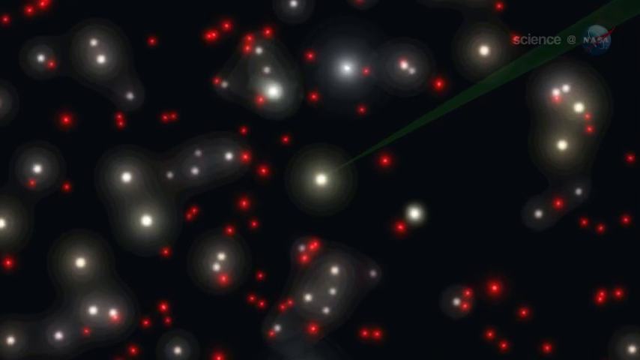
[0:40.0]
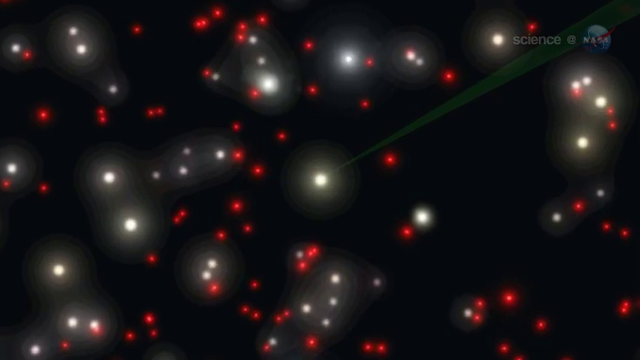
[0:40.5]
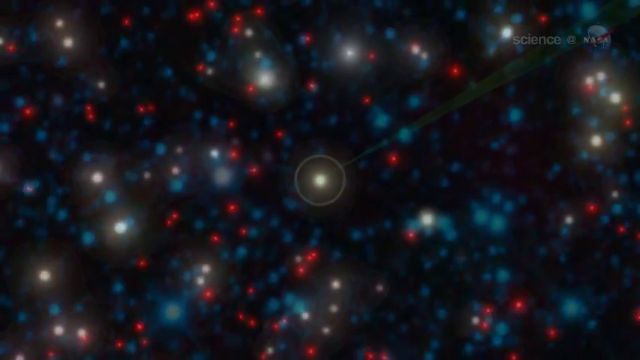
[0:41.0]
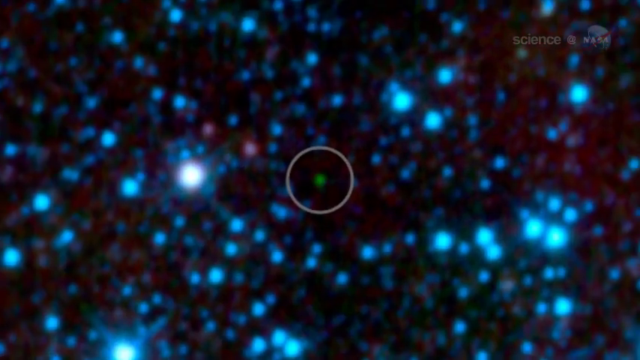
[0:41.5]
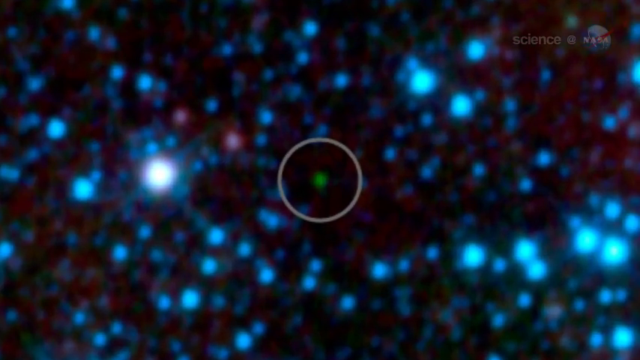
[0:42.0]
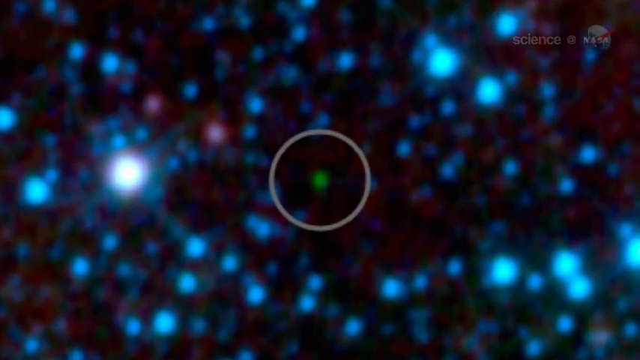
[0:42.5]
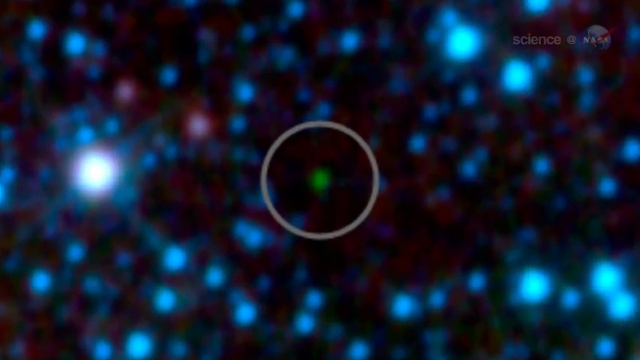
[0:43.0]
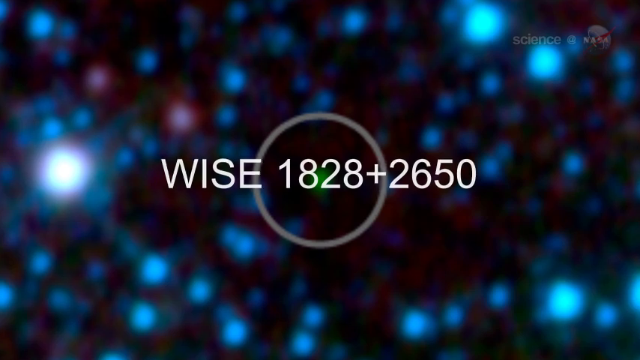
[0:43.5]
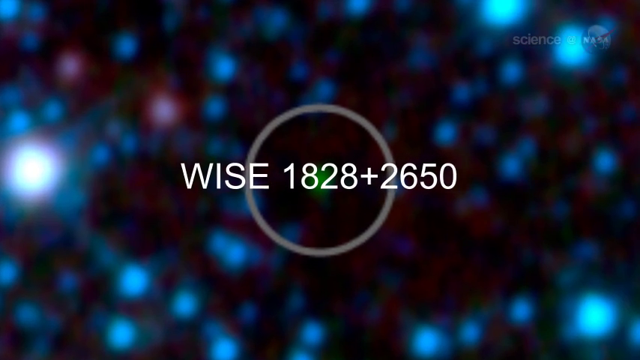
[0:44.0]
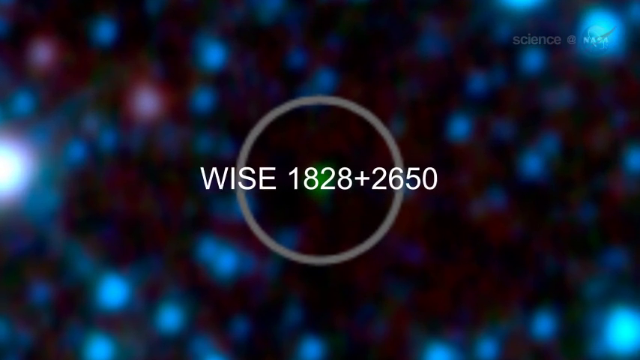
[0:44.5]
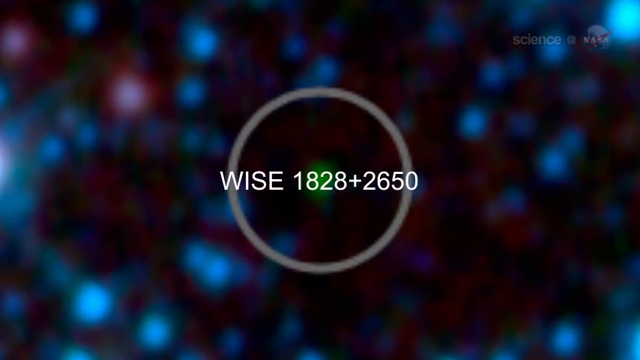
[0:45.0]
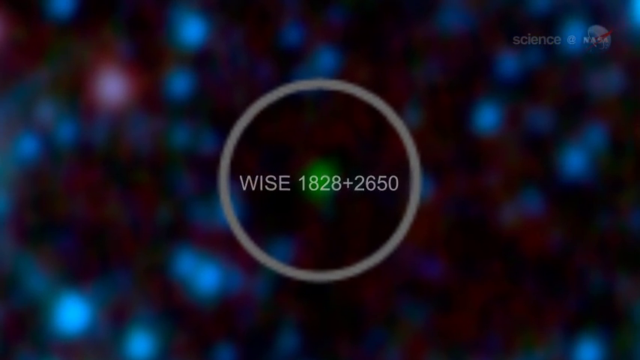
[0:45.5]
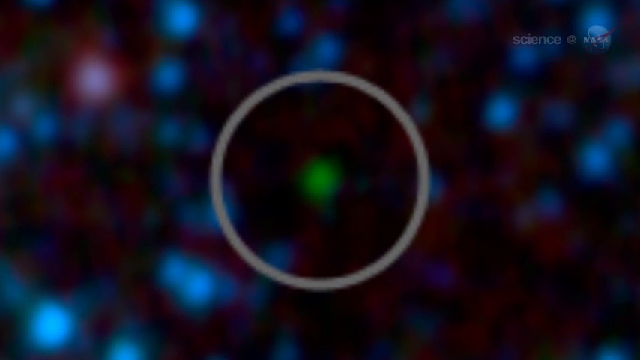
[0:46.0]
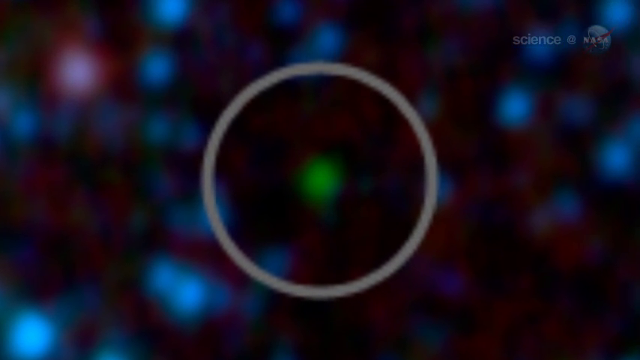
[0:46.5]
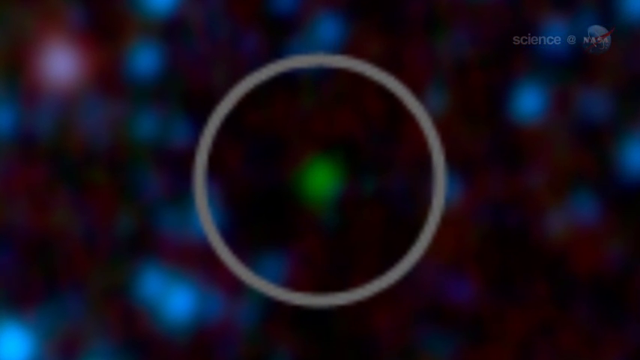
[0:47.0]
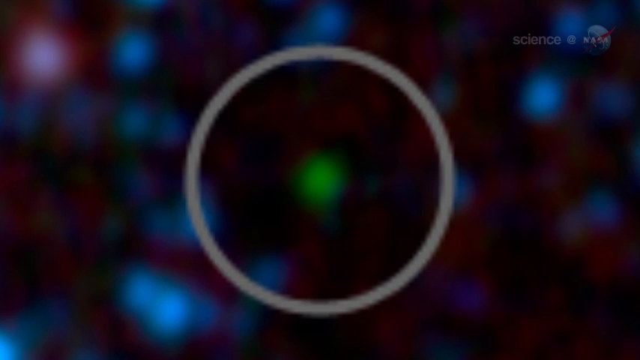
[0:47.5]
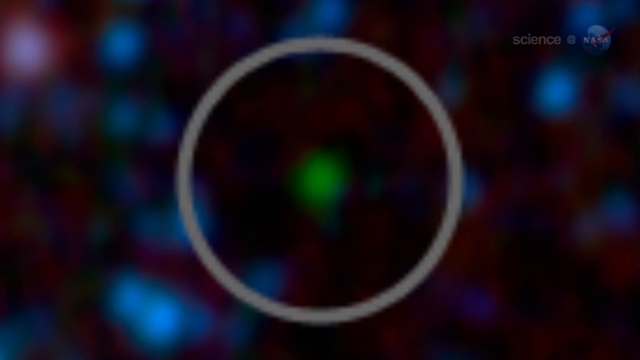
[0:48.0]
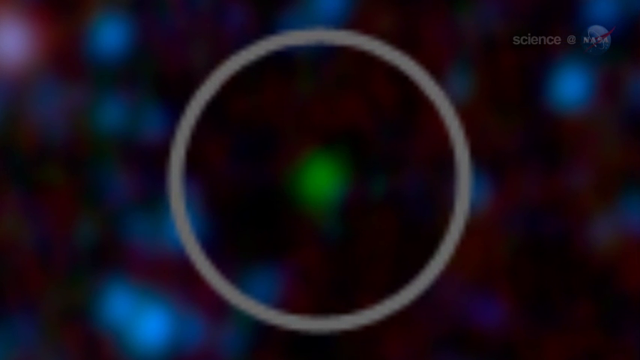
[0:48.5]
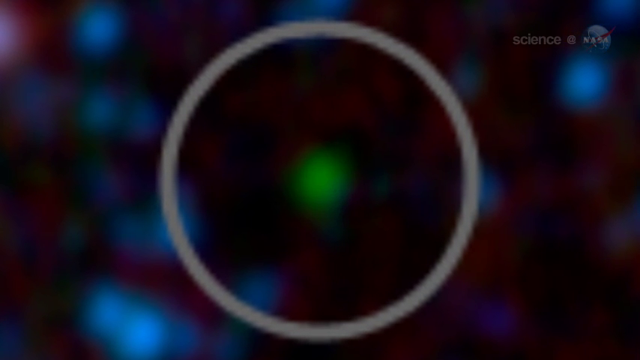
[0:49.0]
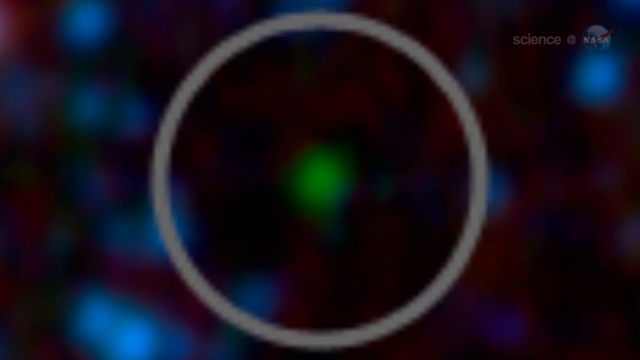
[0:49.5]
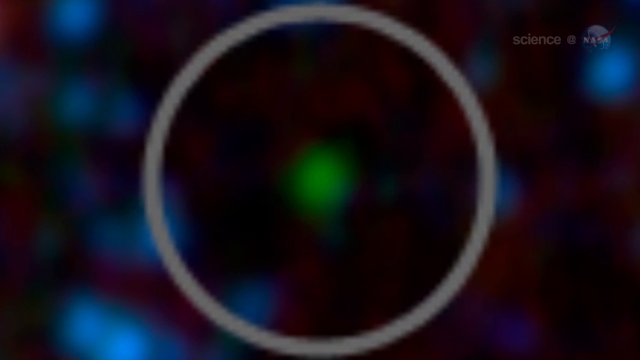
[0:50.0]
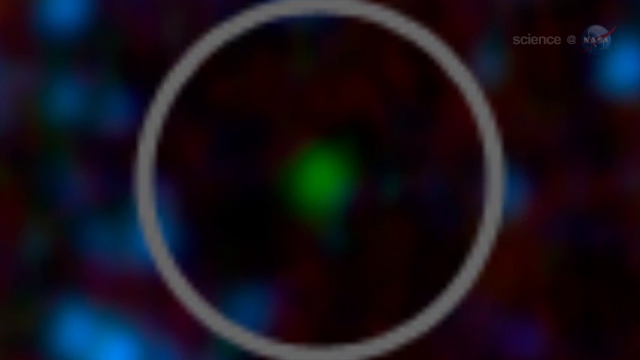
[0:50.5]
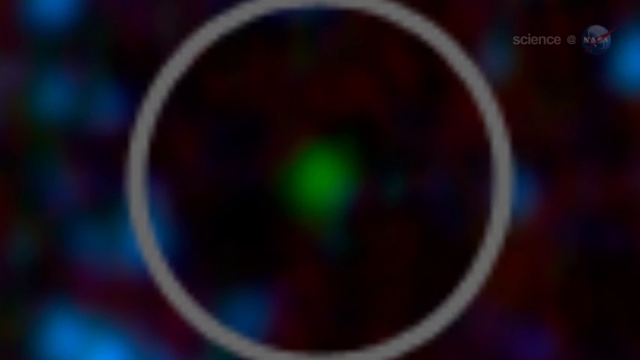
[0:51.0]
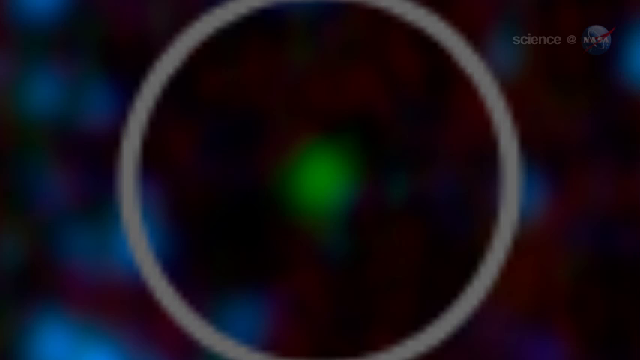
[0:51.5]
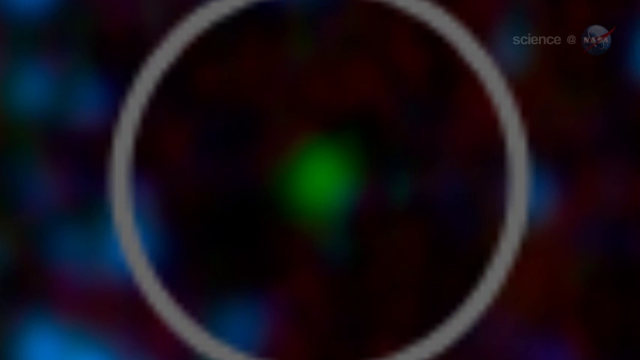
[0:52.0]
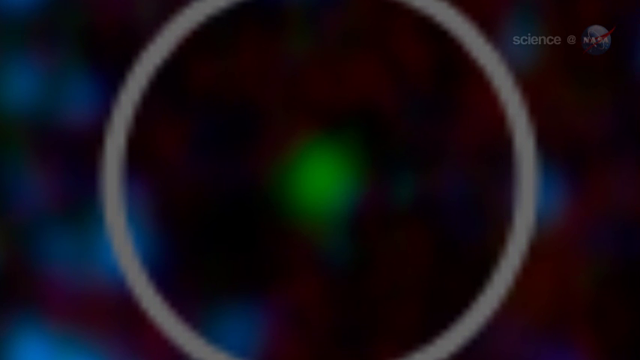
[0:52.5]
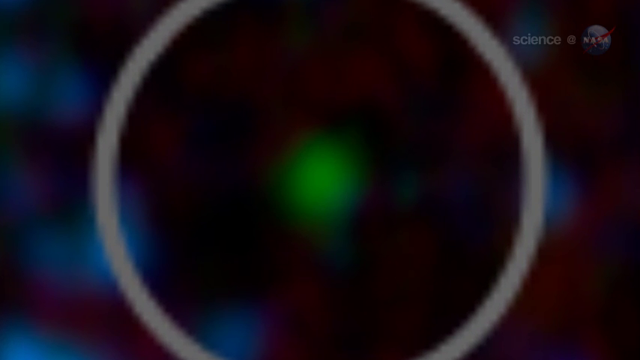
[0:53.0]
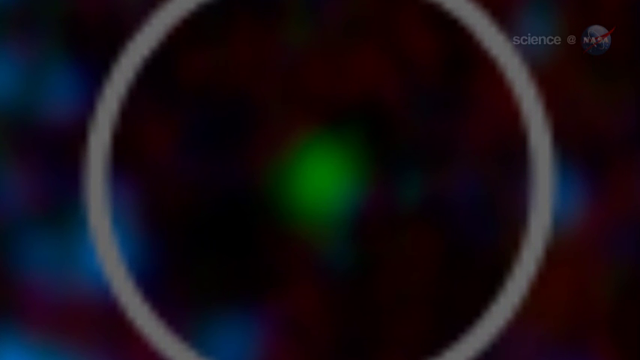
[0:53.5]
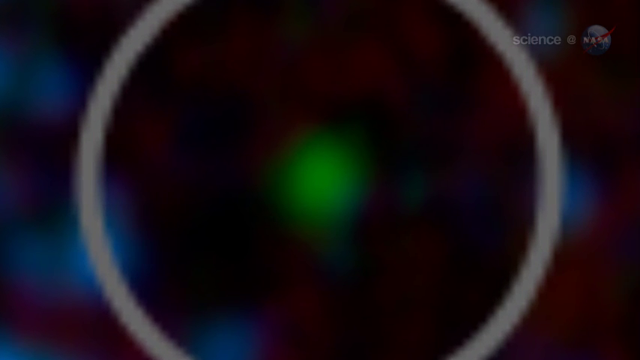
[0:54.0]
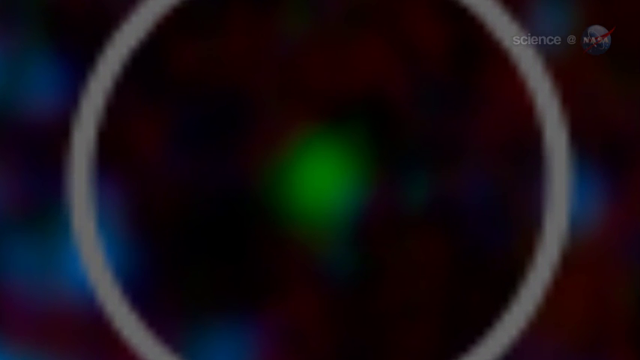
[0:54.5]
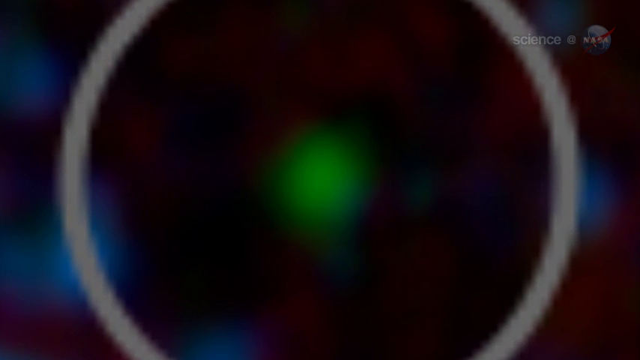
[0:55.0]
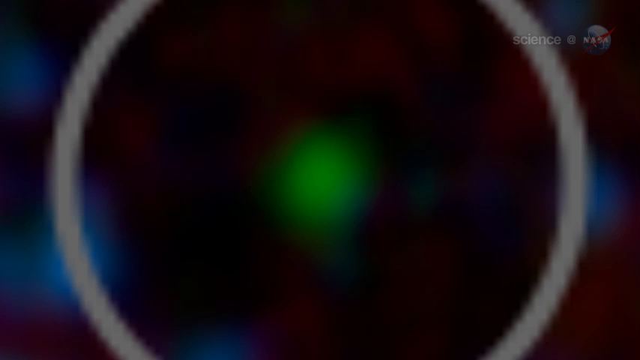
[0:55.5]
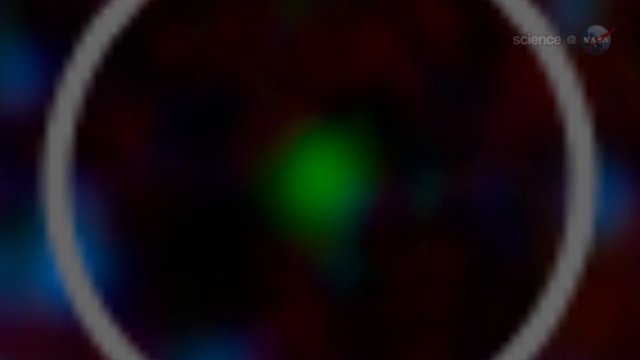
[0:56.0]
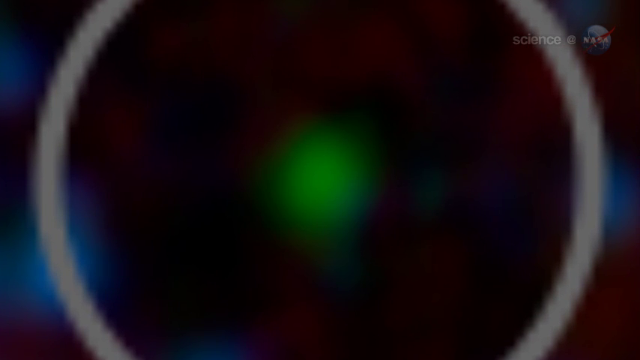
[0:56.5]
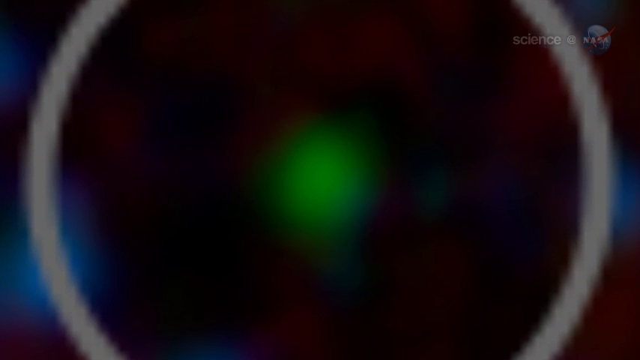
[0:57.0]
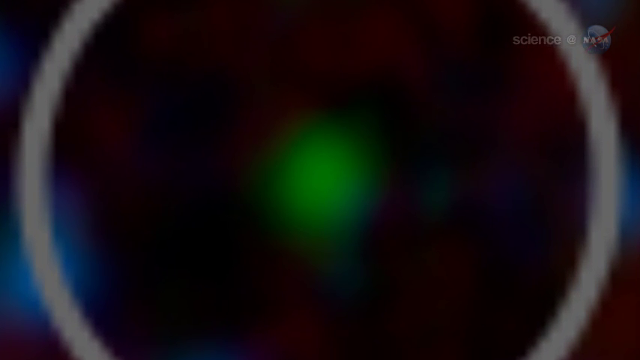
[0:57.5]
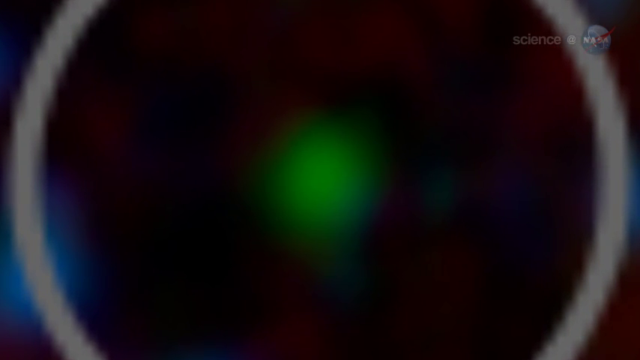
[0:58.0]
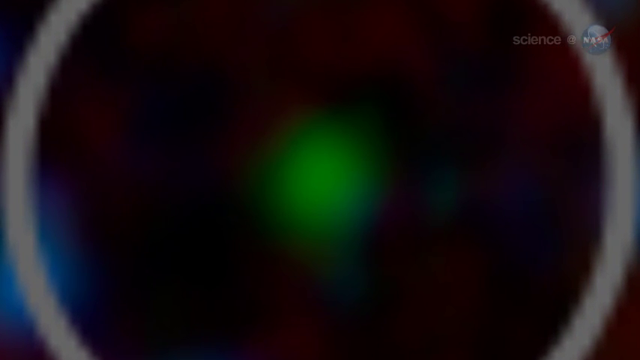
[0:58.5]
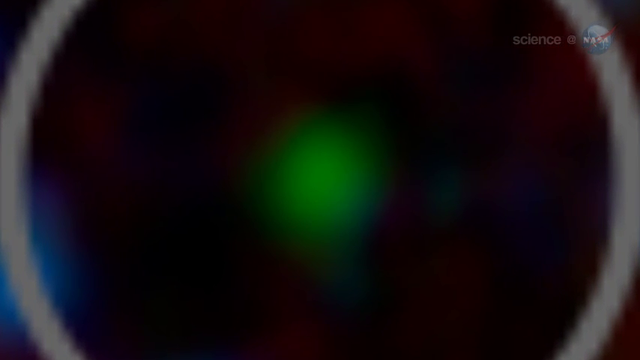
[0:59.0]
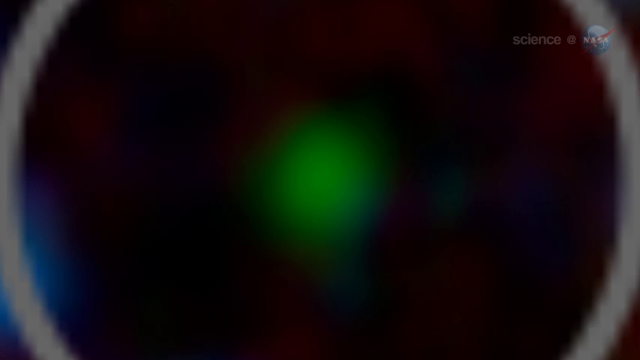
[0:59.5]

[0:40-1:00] The camera continues zooming in on the structure with the red and yellow stars inside it, moving closer to one of the yellow ones. It then cuts and zooms closer into what look like blue stars. A gray circle surrounds one star, a little blue speck, and "wise 1828 plus 2650" appears on the screen in white text, fading away as the camera zooms into the circled blue star. The camera keeps moving in so close that the image becomes very pixelated and the quality drops significantly; it is unclear what the star is. In the original picture of the yellow and red stars, one yellow star appears to be pointed out with an arrow, and from that arrow the view jumps into that star, showing green, red and blue stars.